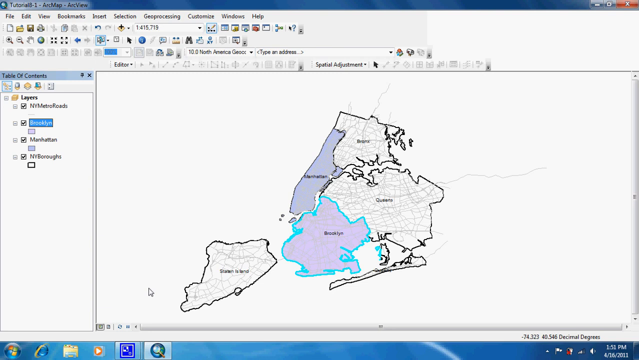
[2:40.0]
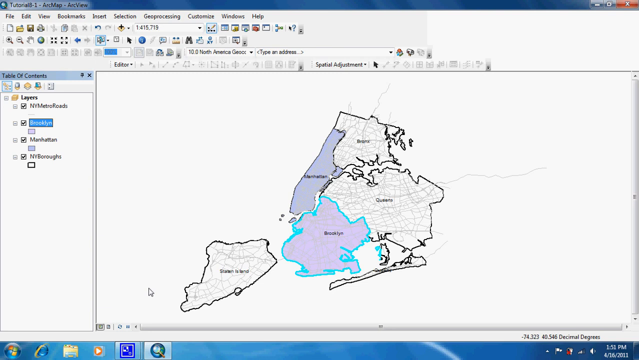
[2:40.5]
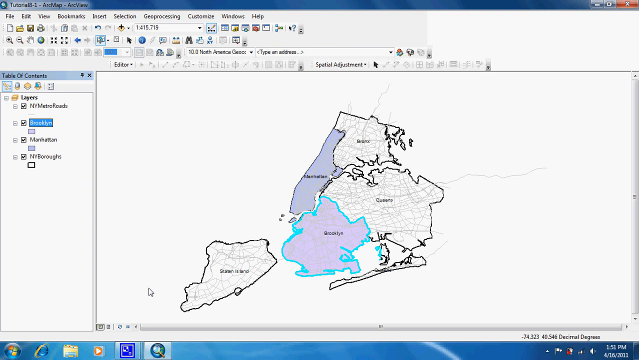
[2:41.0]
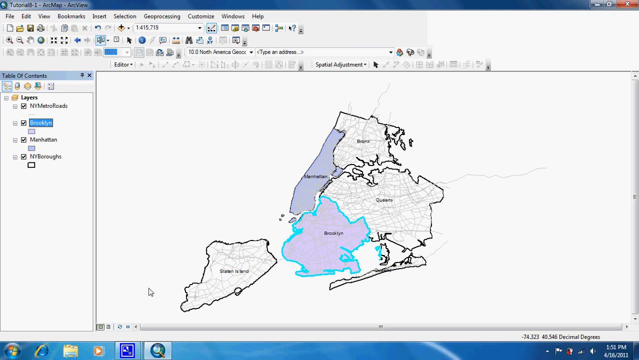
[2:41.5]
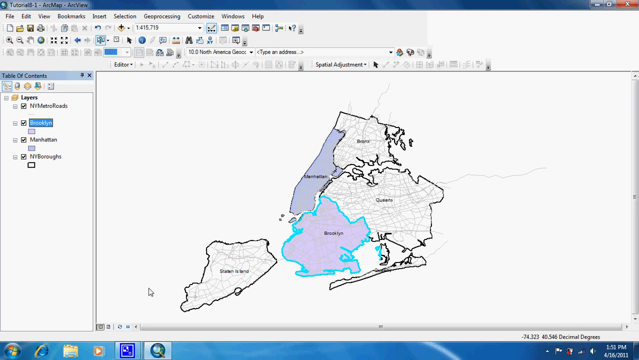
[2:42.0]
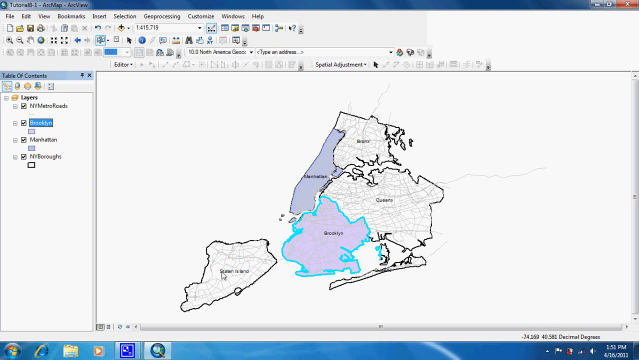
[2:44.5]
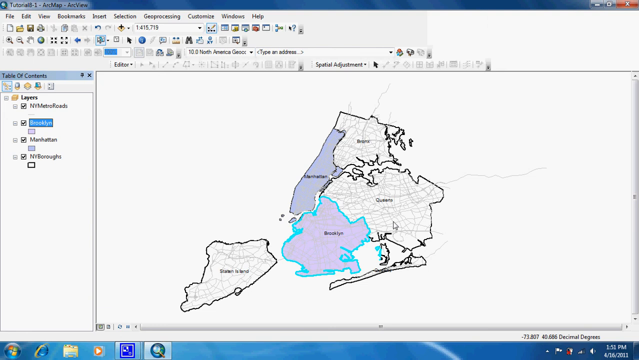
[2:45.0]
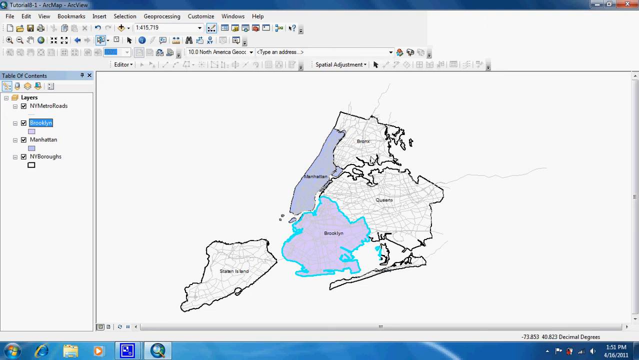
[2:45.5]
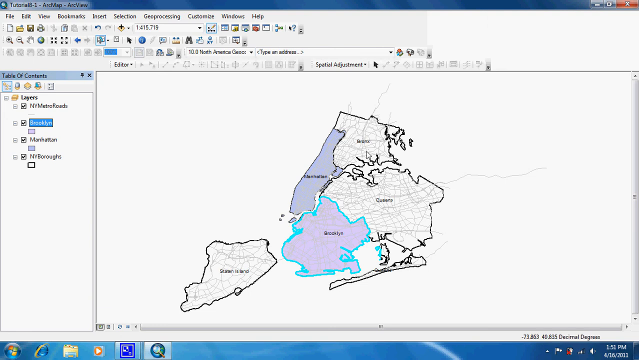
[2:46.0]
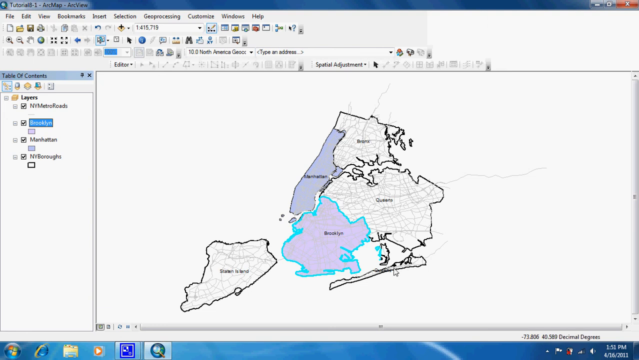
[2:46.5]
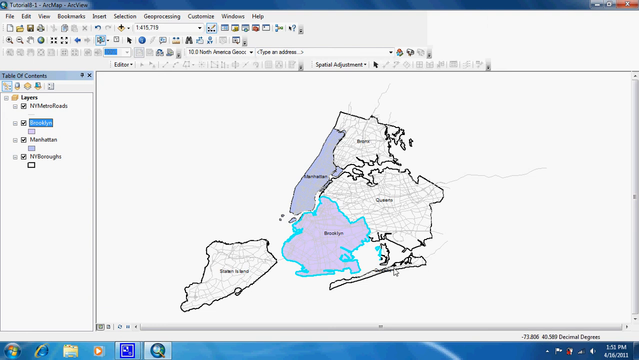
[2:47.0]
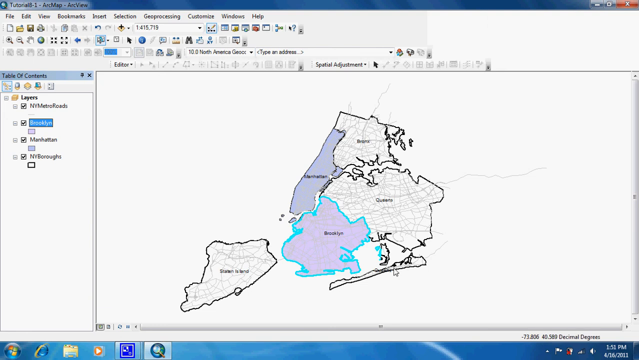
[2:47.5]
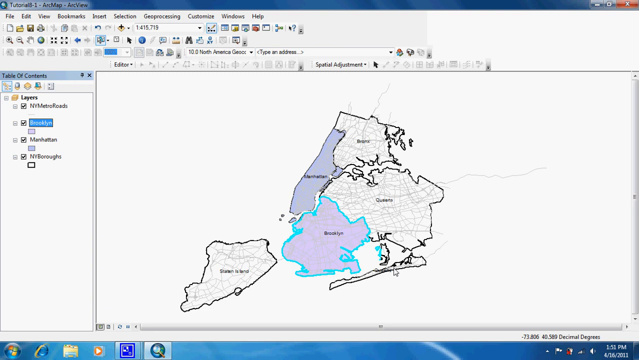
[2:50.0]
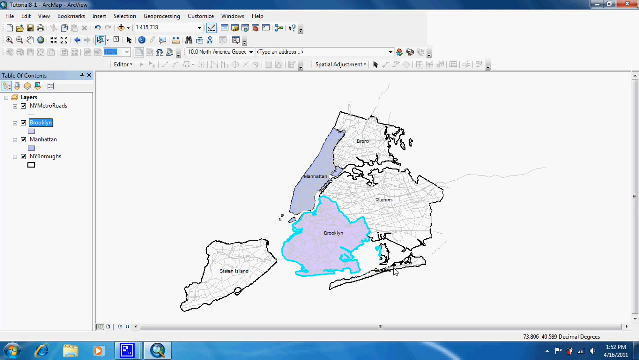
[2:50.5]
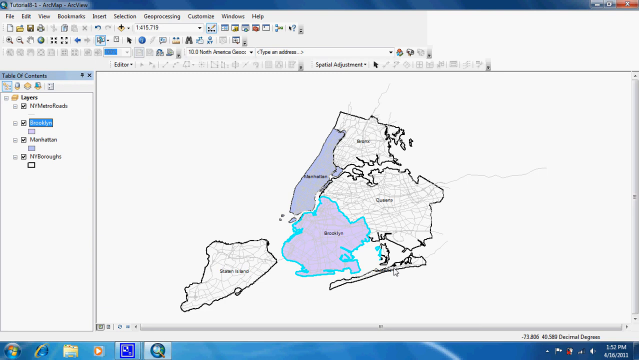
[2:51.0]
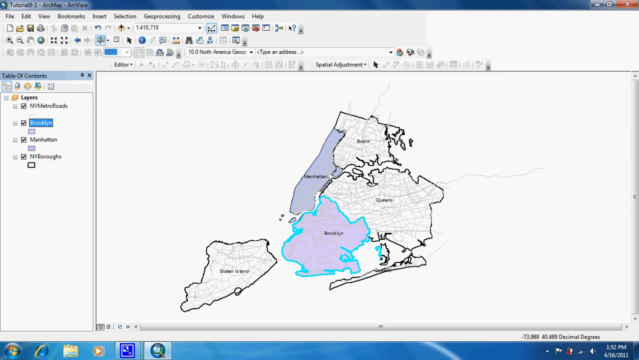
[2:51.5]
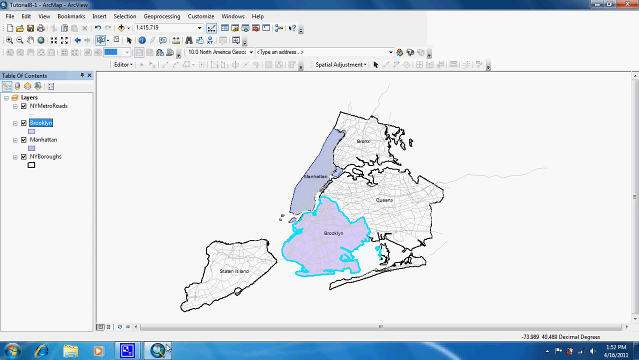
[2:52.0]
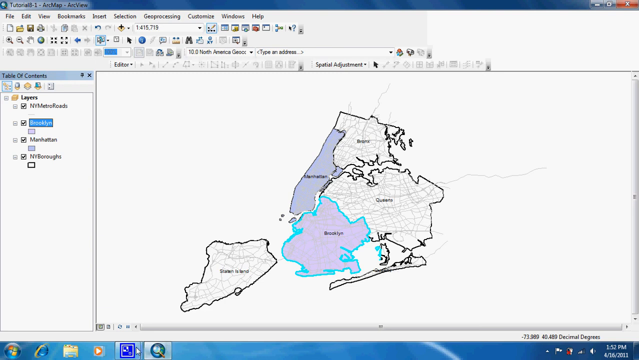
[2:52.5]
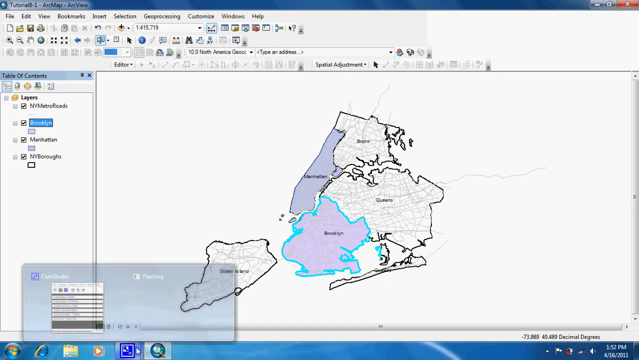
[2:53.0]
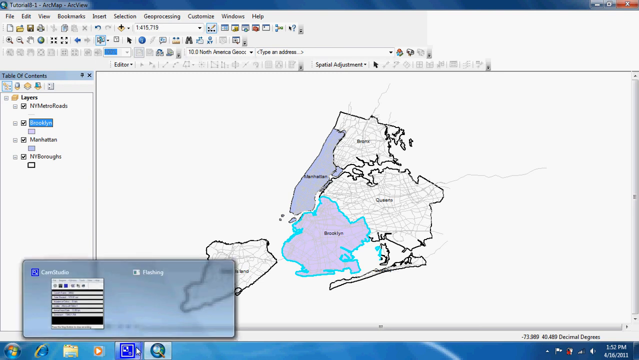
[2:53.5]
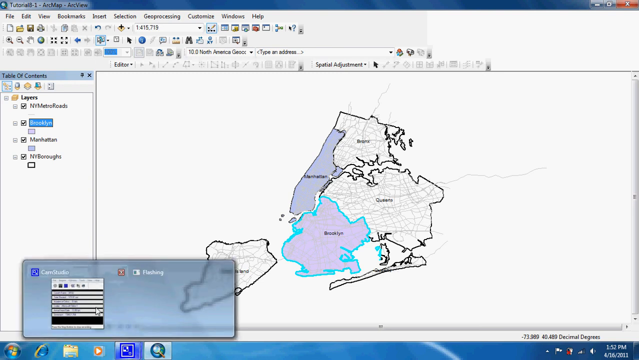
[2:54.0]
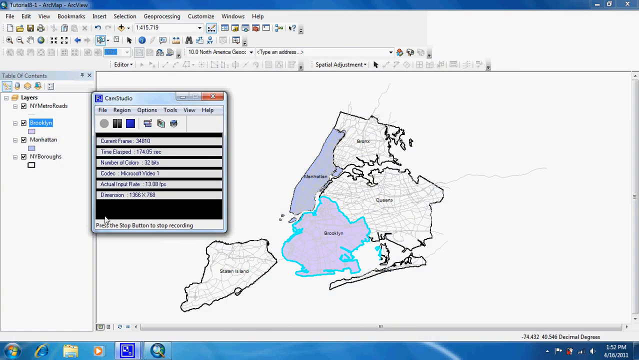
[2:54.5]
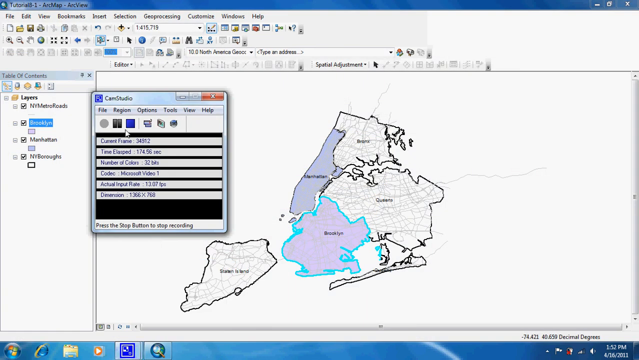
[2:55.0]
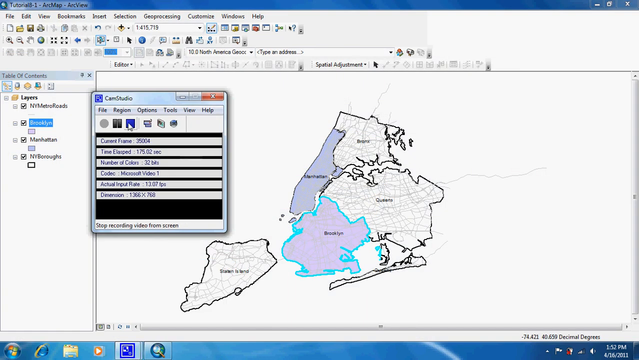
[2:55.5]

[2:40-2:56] The same application is on screen, and the mouse pointer moves all around, including over the map area. It then goes down to the bottom of the screen, where the Windows Start button and some applications are visible, and clicks an application shown as a royal blue square. This opens an app called CamStudio. A button in the CamStudio window, apparently also a royal blue square, seems to be clicked. The CamStudio window's menu options are File, Region, Options, Tools, View and Help, with six icons beneath them and some rows of information below that.